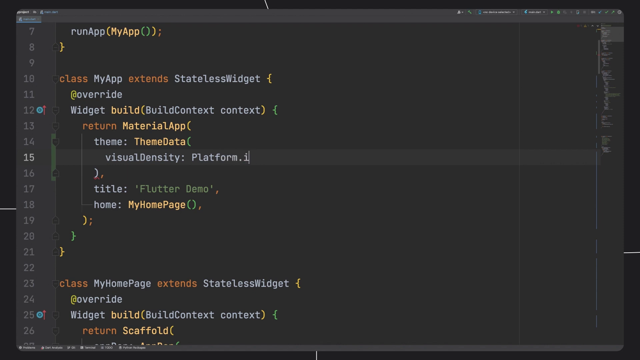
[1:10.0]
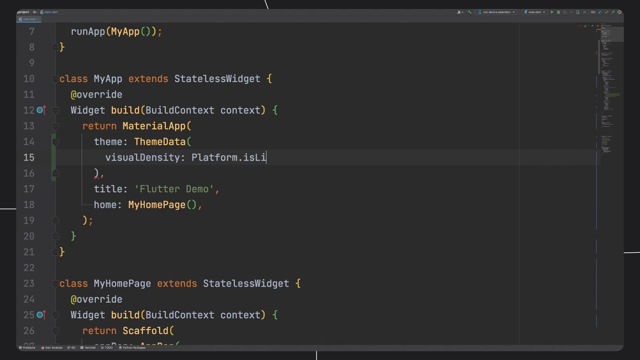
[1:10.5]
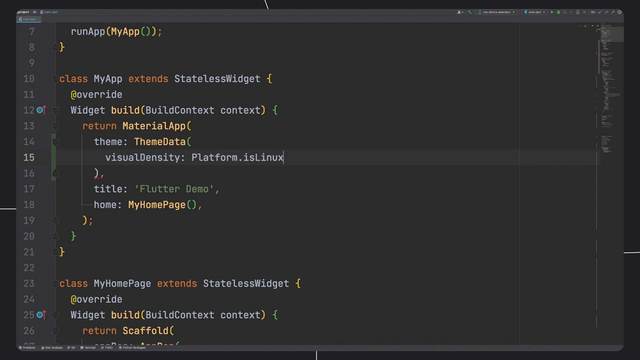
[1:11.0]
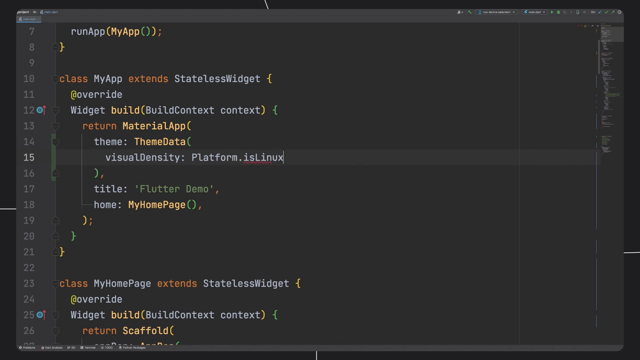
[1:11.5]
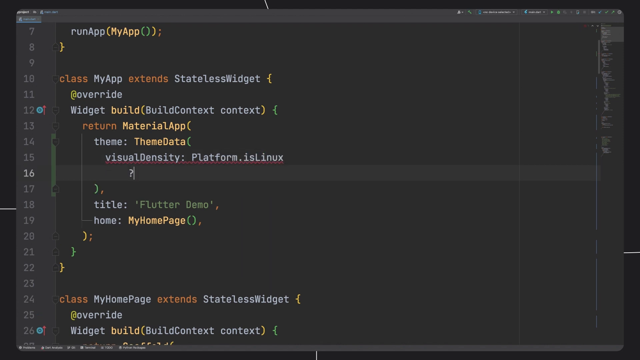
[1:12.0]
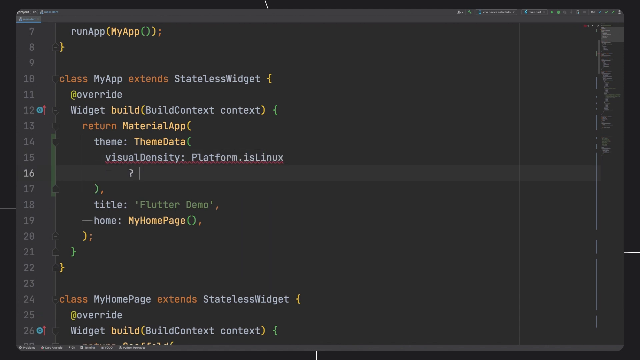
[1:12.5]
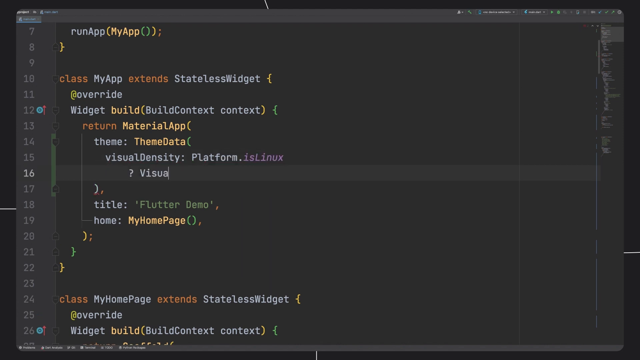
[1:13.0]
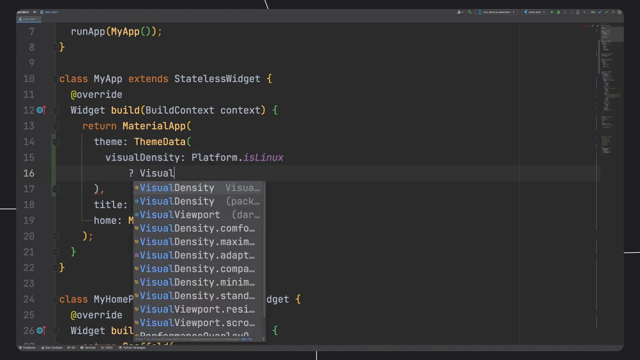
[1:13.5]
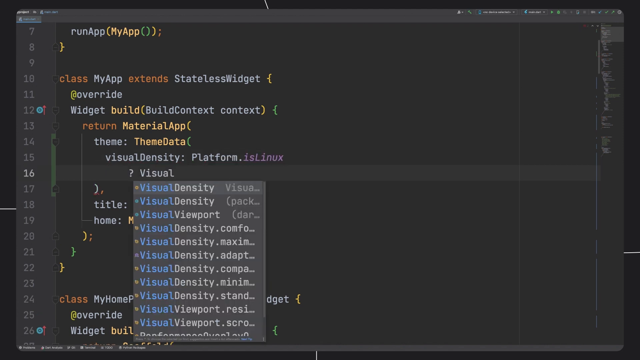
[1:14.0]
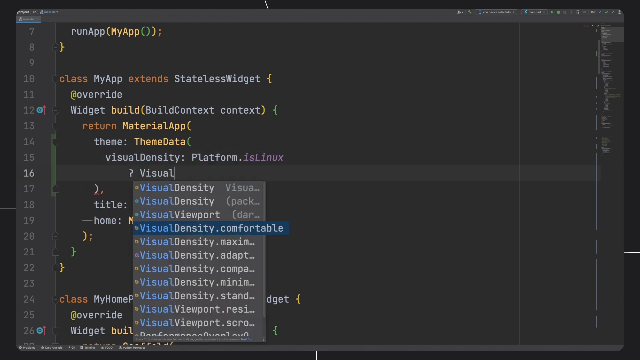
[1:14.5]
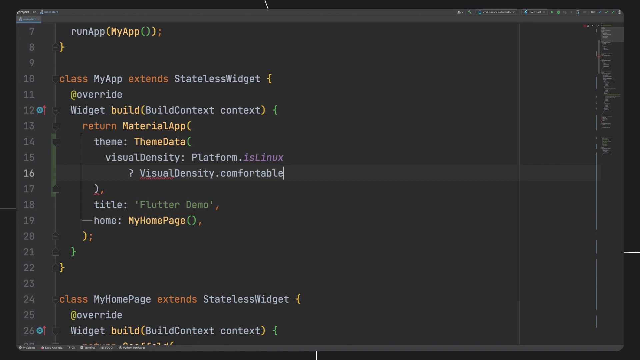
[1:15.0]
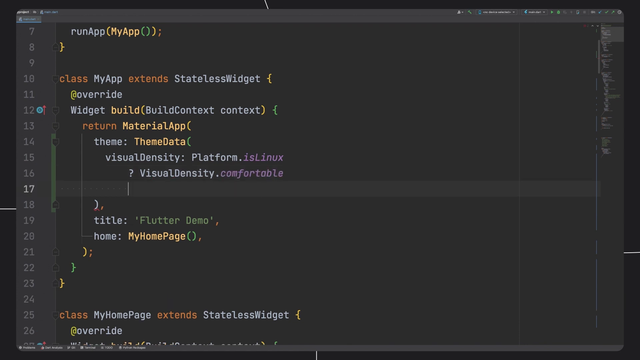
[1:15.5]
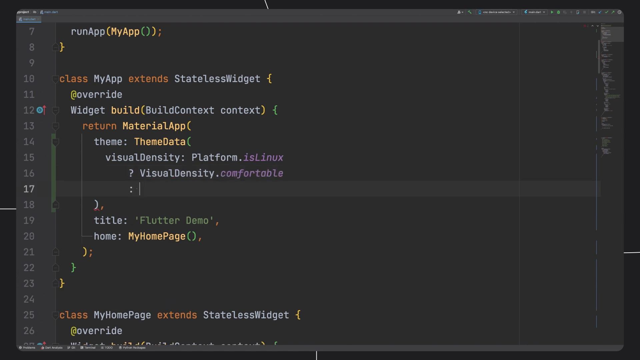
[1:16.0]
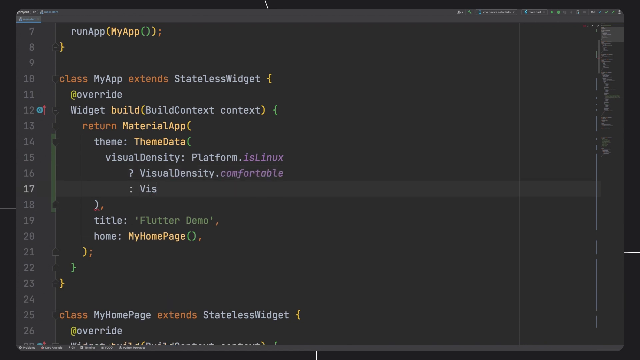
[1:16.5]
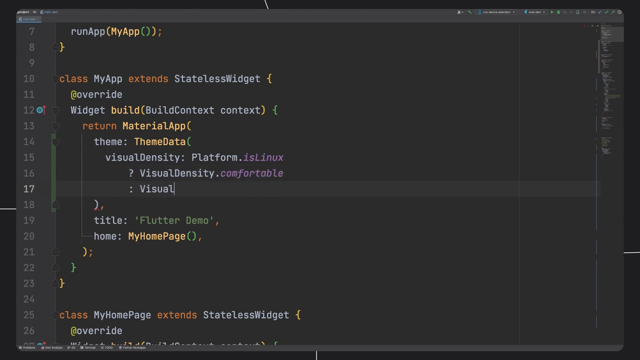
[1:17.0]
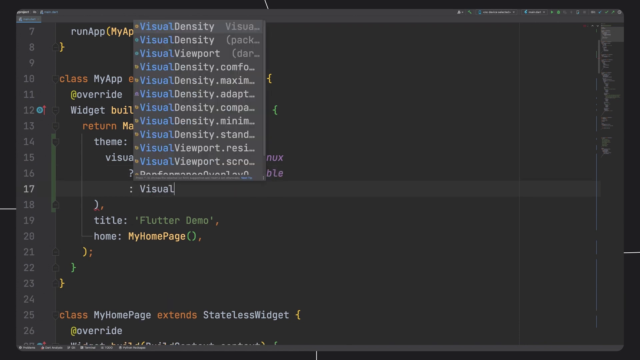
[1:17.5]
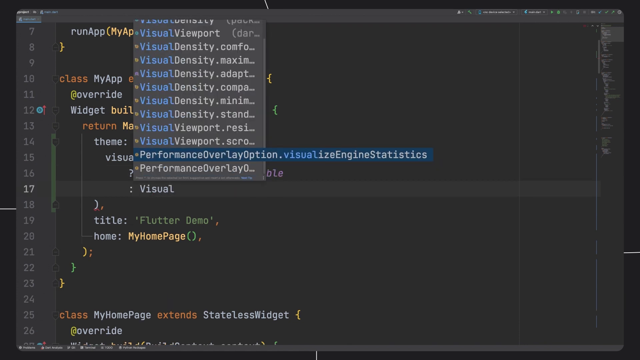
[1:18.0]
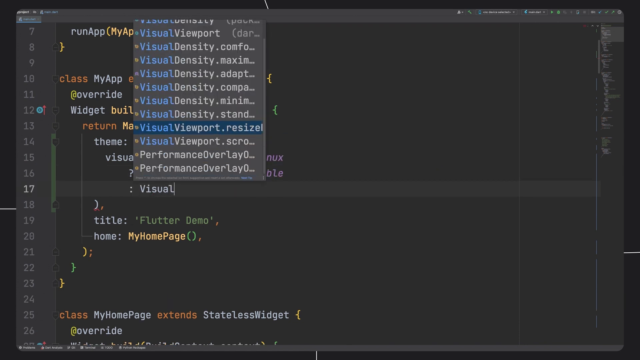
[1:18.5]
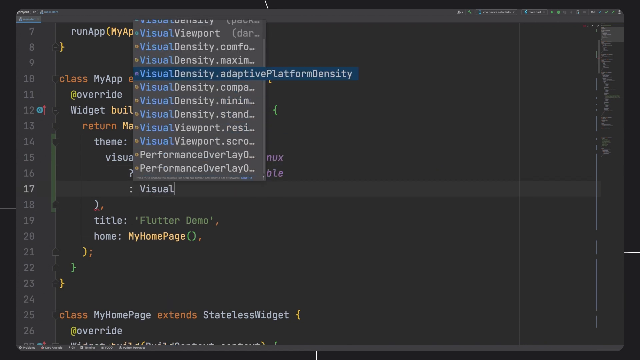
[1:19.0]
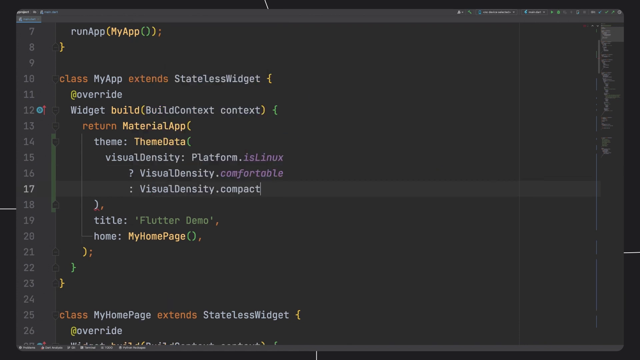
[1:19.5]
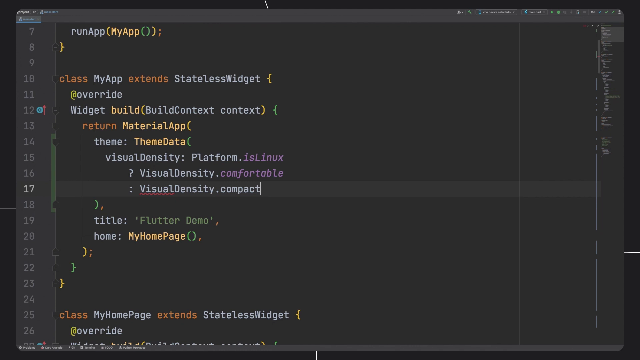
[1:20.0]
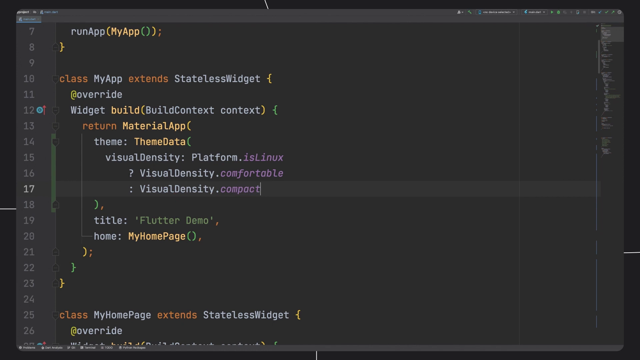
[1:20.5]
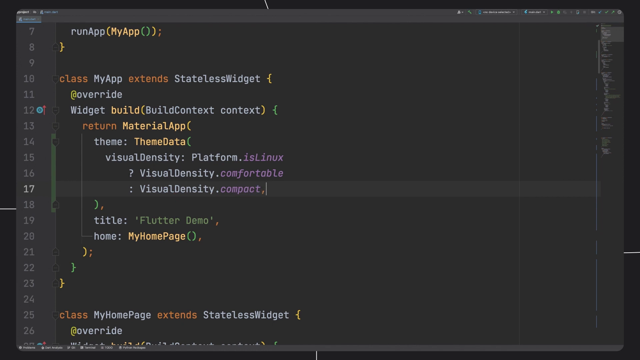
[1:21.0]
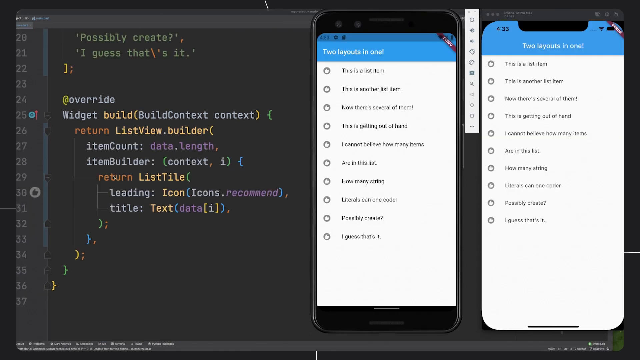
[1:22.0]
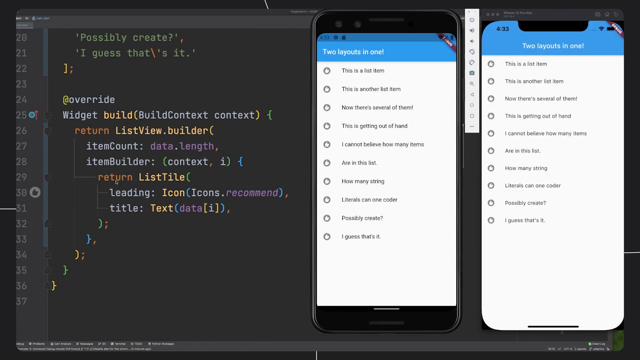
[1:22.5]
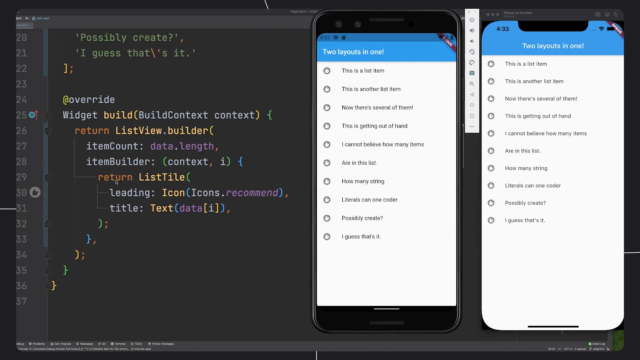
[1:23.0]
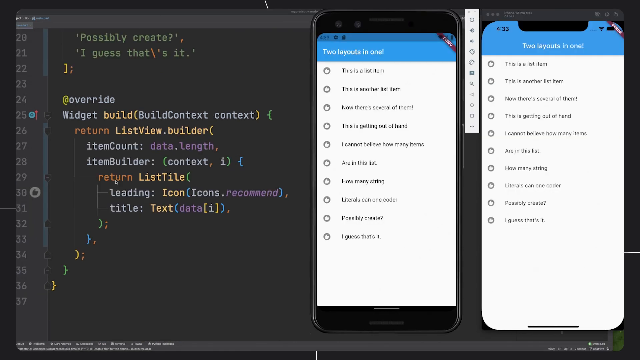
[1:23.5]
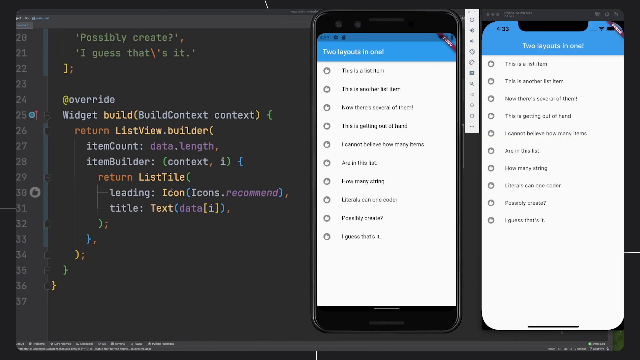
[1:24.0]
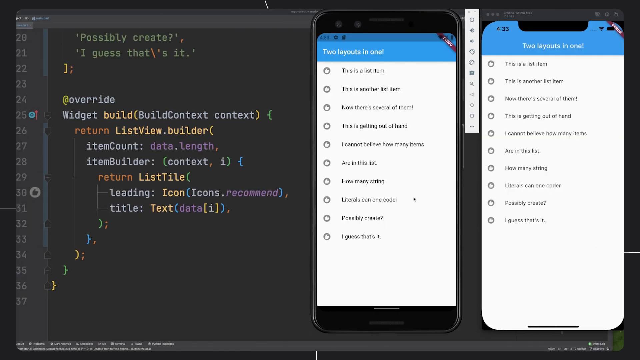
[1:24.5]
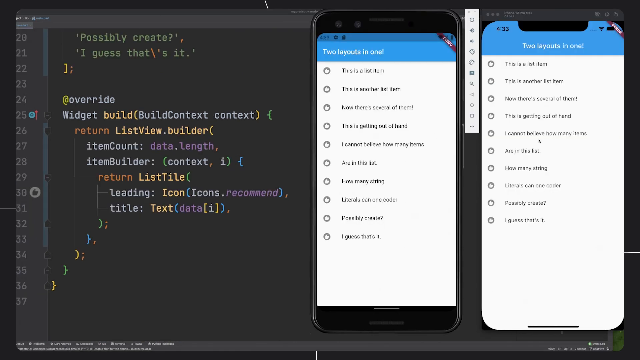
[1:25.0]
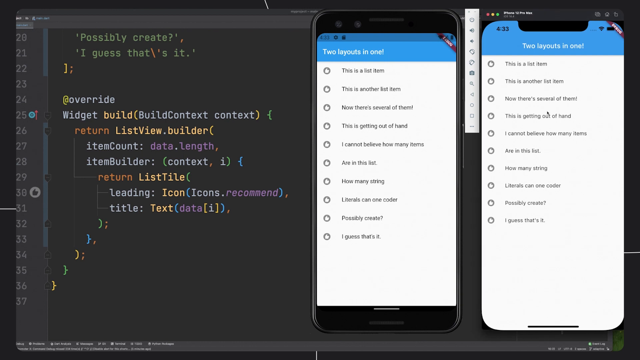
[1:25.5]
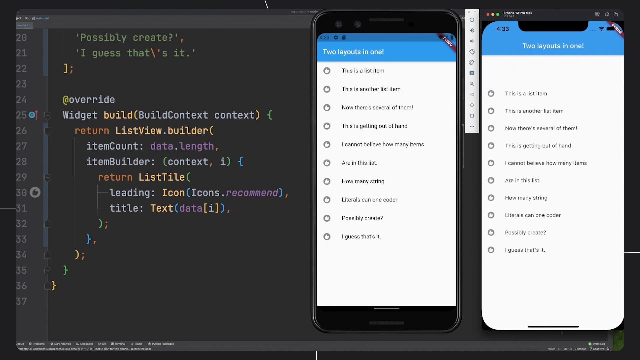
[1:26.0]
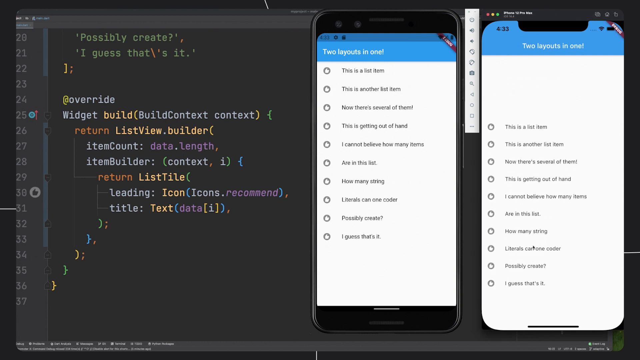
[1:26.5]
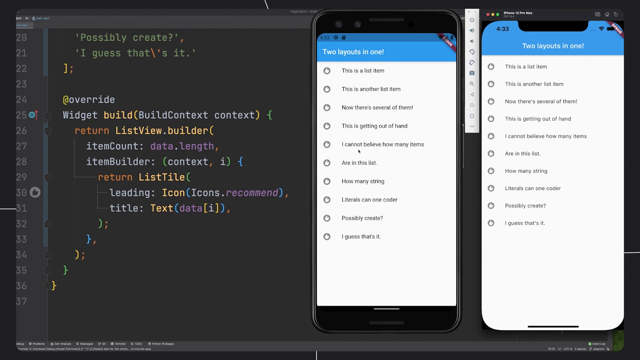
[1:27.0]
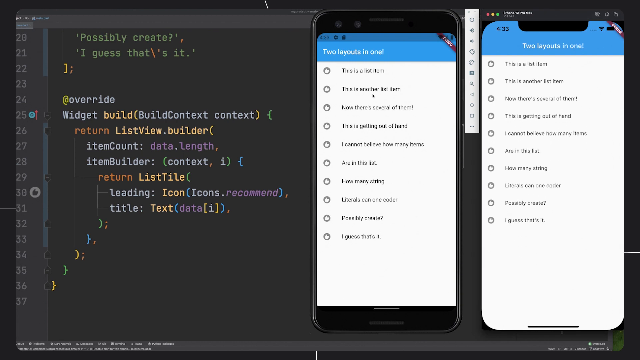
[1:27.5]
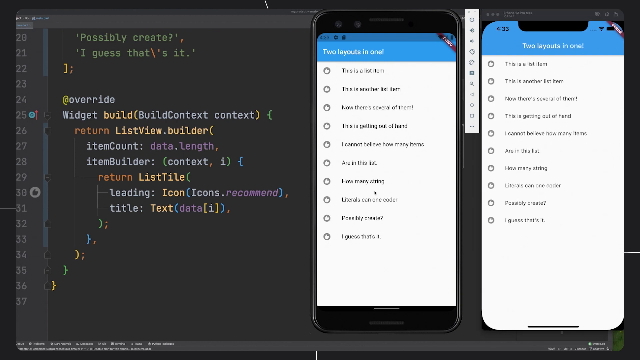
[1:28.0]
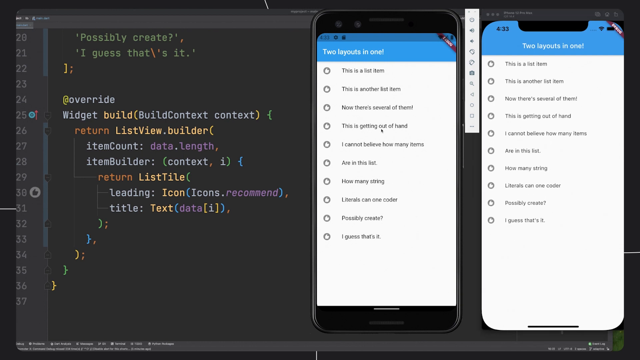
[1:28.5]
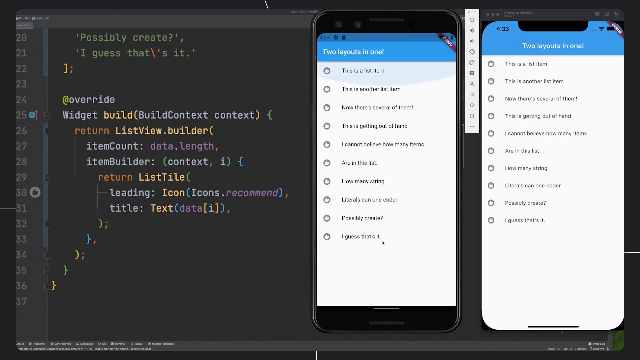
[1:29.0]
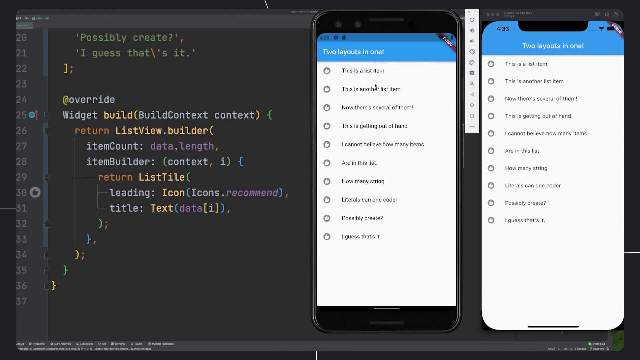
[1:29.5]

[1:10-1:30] The page shows code including run app, MyApplication, class, extends, widget, override, build context, return material application, theme, ThemeData and visual density, with the title "FlutterDemo" and MyHomePage. The user is developing his own application, apparently a design application for creating backgrounds, and the video shows how he codes it. He types his code and then chooses compact so the whole layout is compact. Two full screens are then shown, with a drop-down between them.